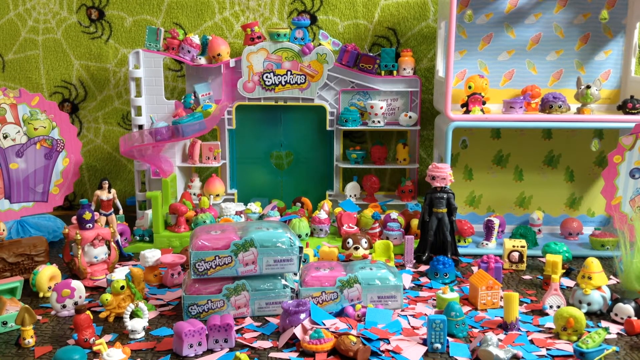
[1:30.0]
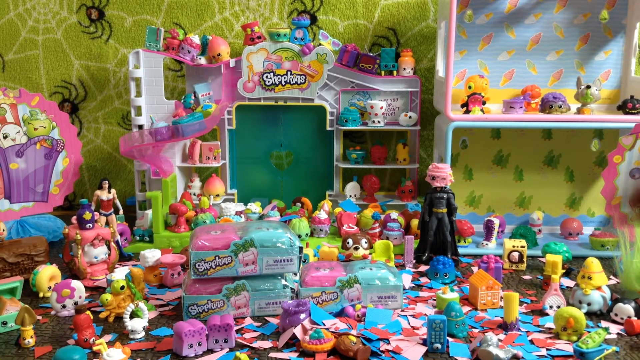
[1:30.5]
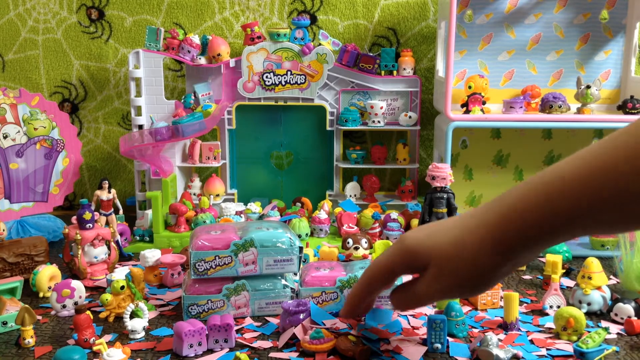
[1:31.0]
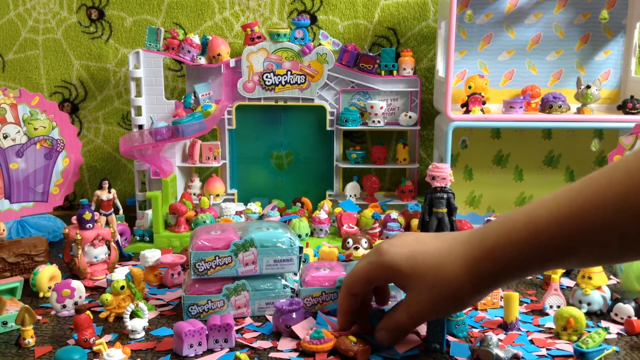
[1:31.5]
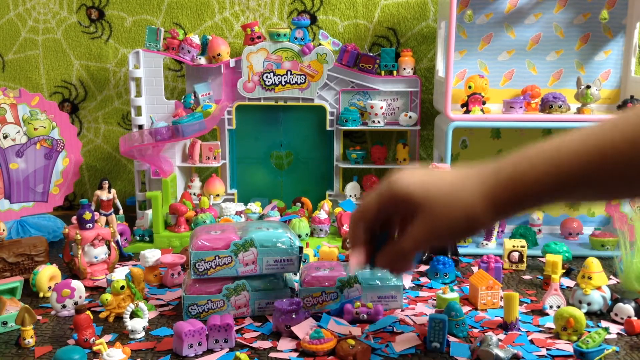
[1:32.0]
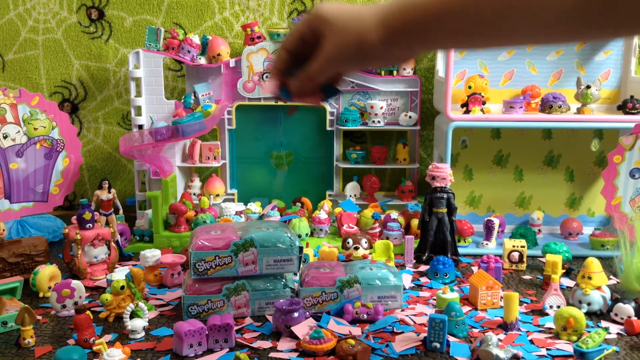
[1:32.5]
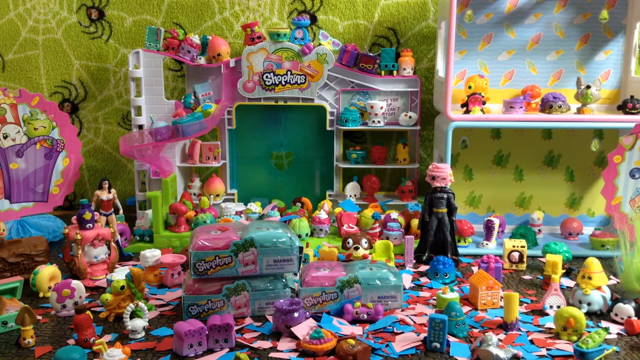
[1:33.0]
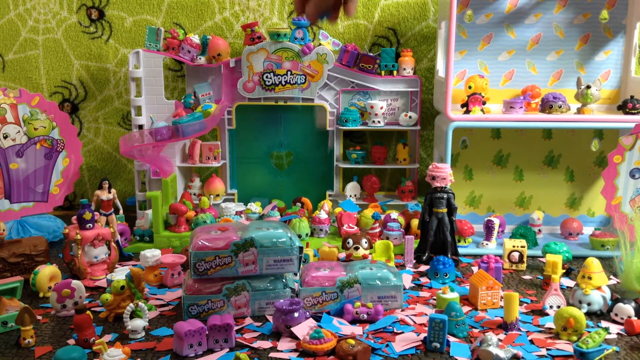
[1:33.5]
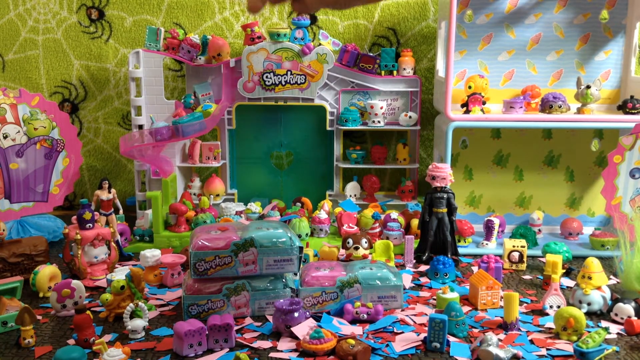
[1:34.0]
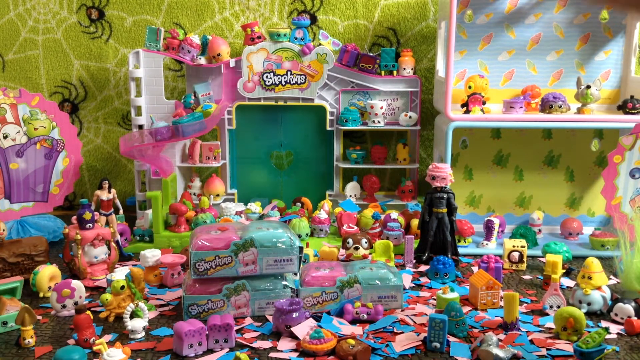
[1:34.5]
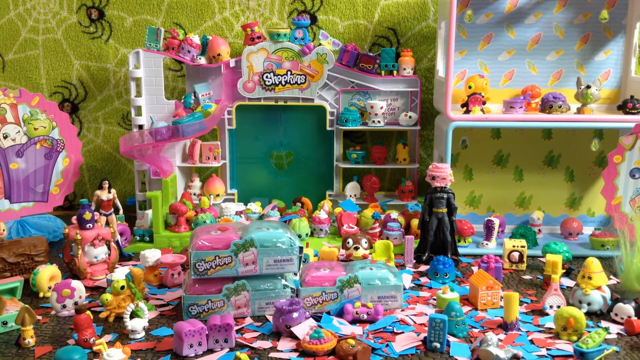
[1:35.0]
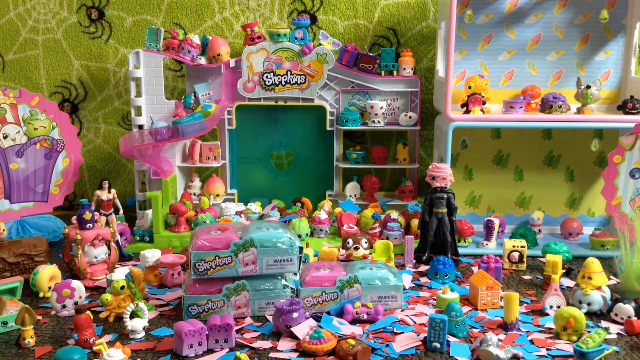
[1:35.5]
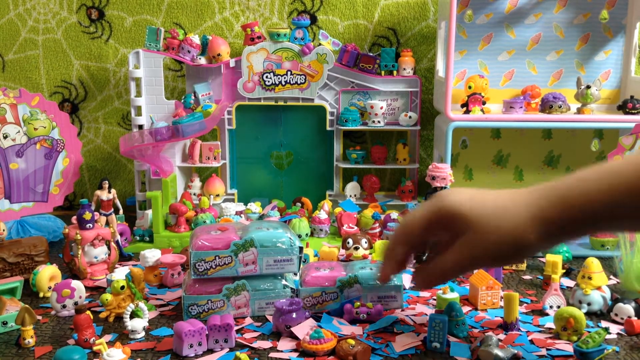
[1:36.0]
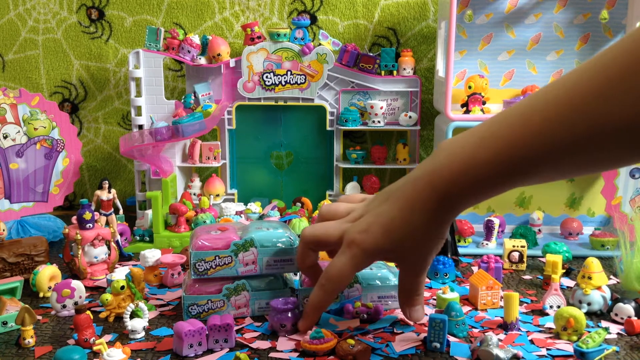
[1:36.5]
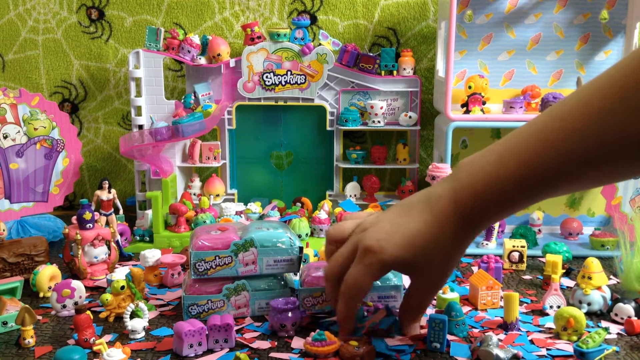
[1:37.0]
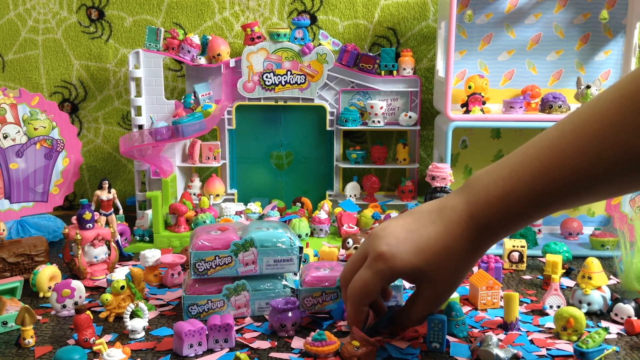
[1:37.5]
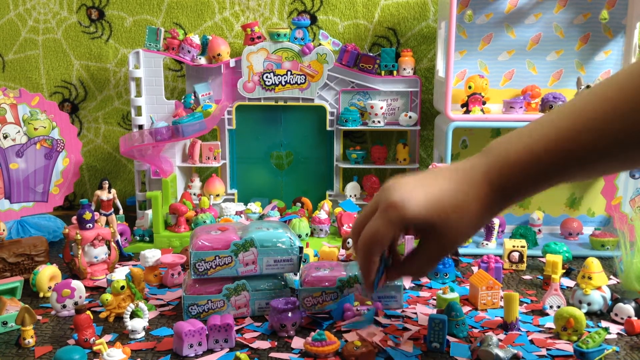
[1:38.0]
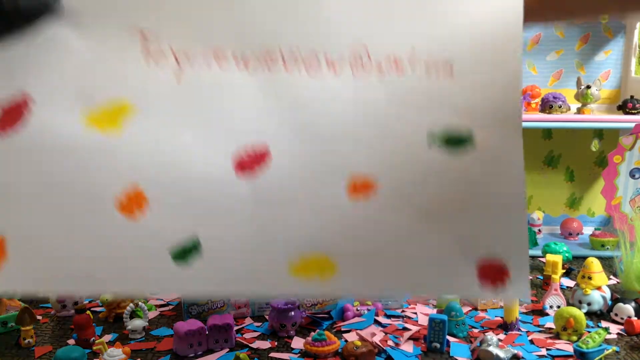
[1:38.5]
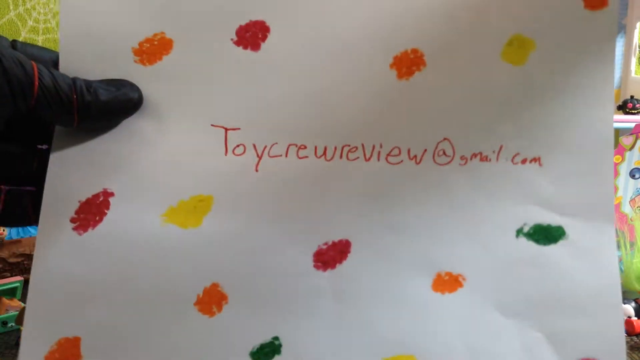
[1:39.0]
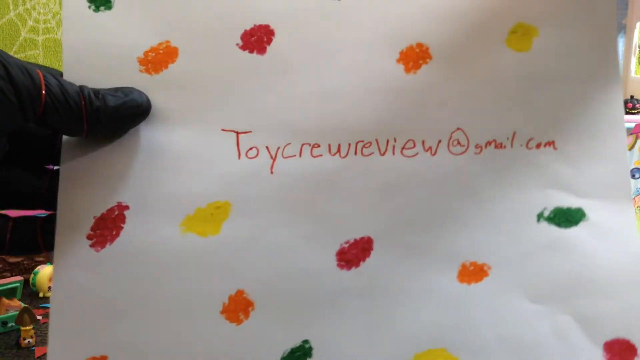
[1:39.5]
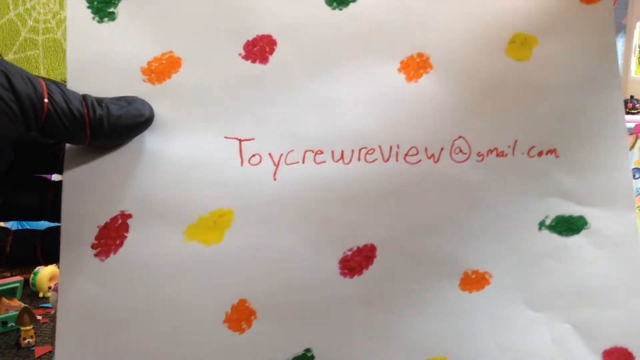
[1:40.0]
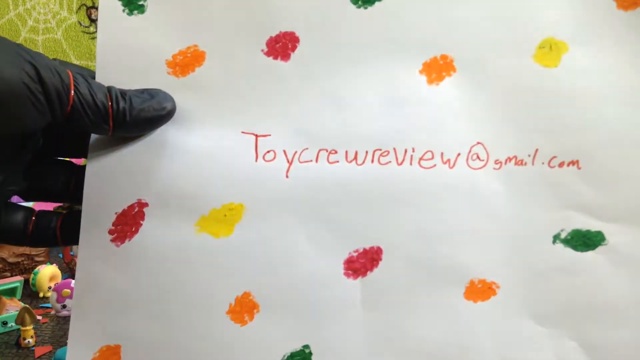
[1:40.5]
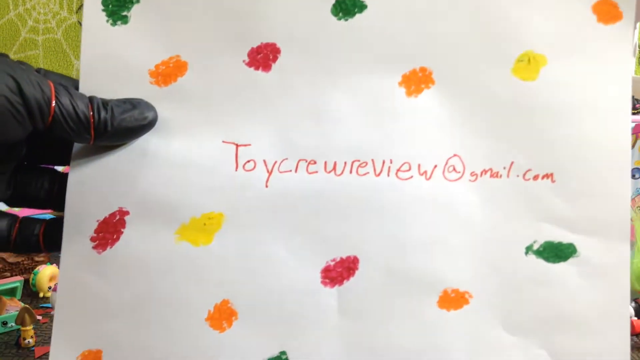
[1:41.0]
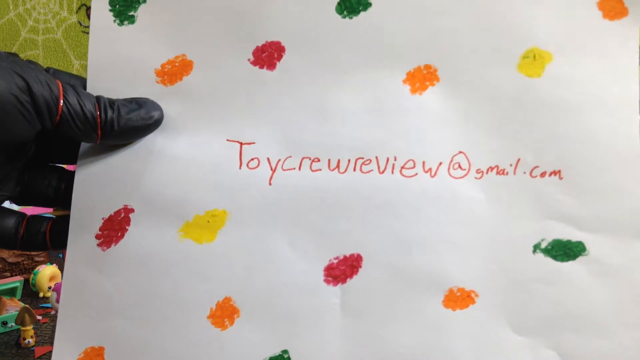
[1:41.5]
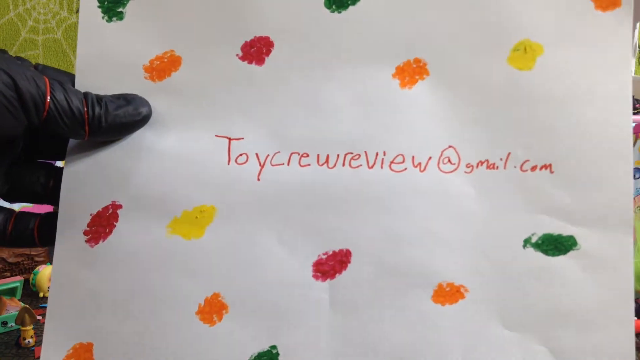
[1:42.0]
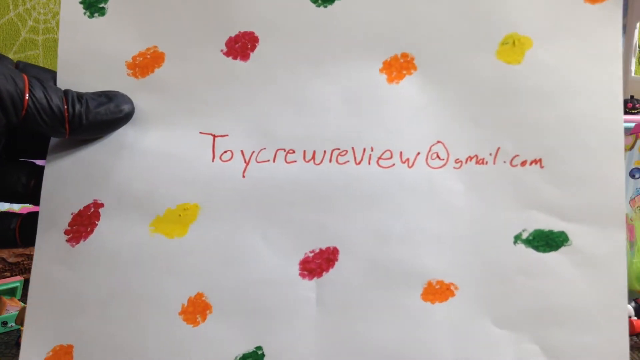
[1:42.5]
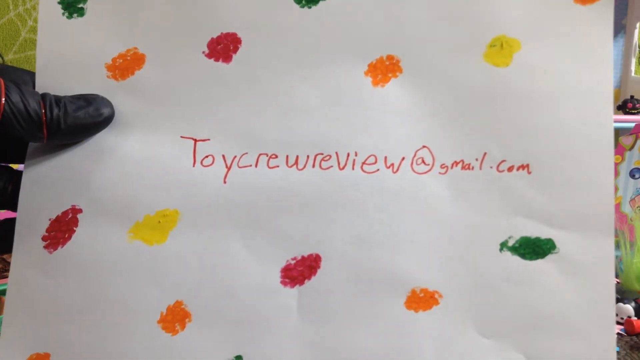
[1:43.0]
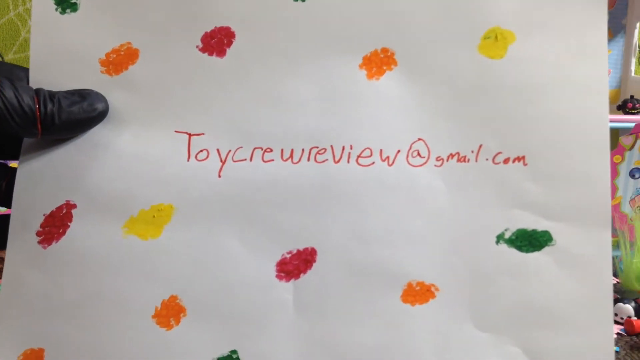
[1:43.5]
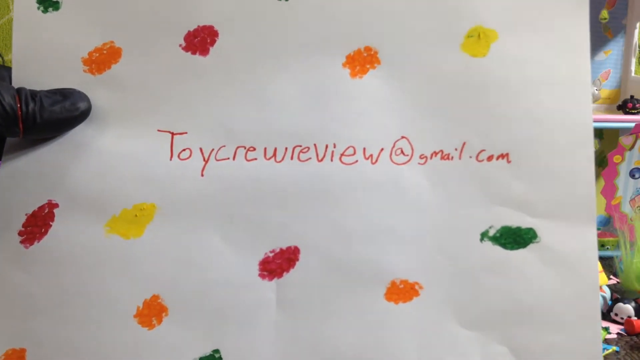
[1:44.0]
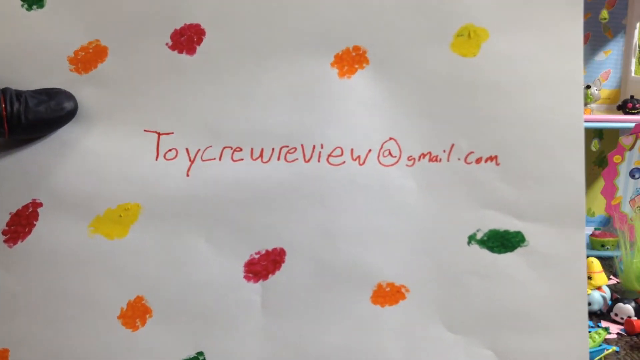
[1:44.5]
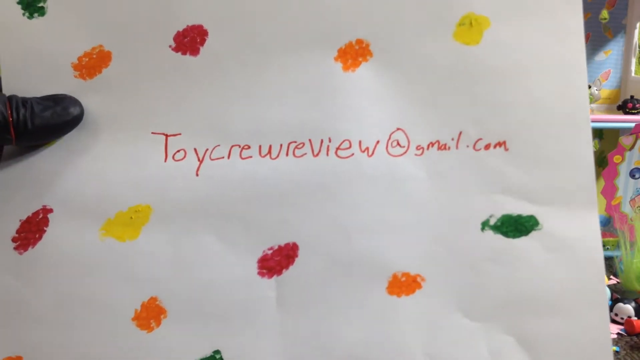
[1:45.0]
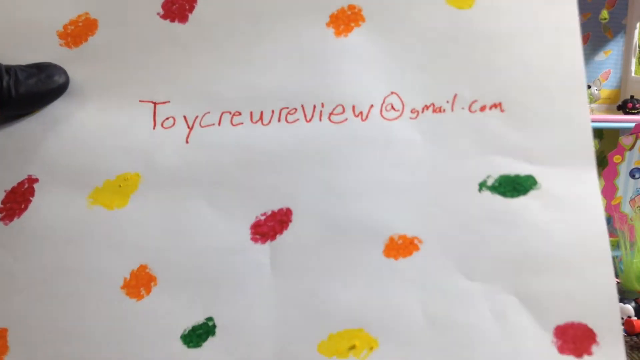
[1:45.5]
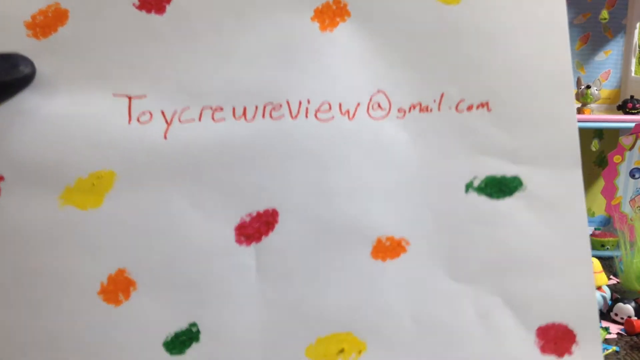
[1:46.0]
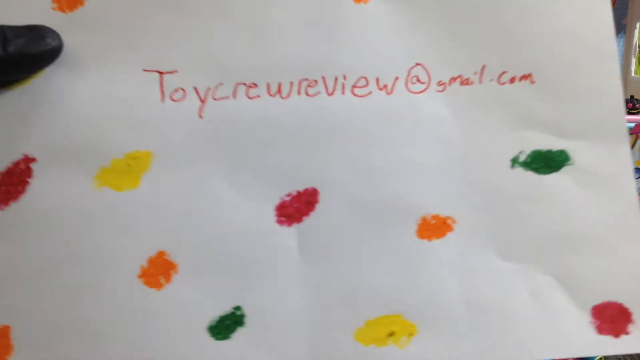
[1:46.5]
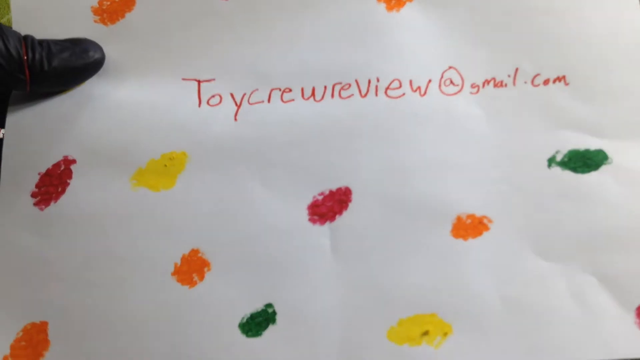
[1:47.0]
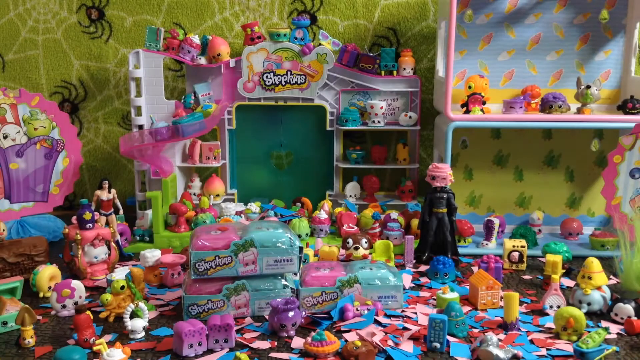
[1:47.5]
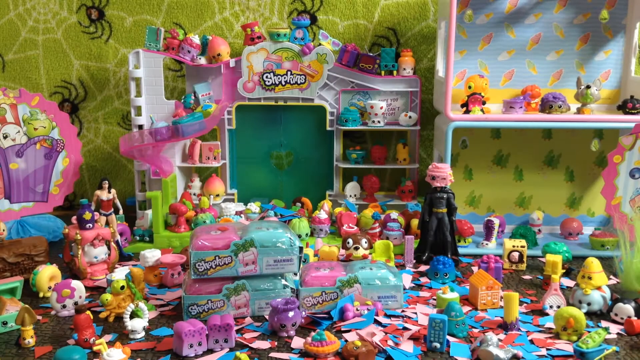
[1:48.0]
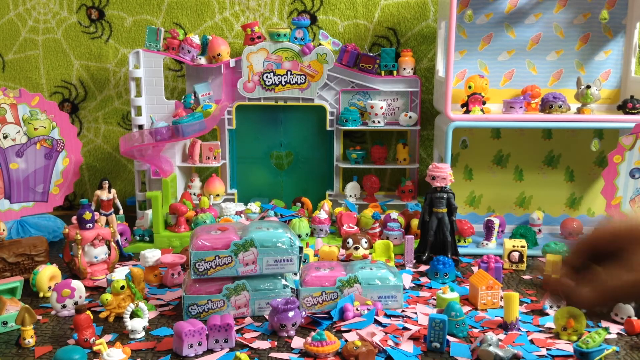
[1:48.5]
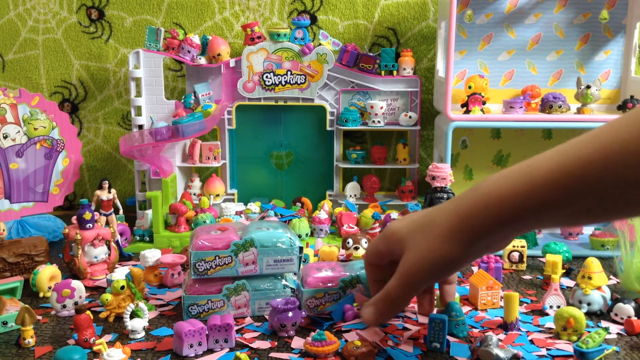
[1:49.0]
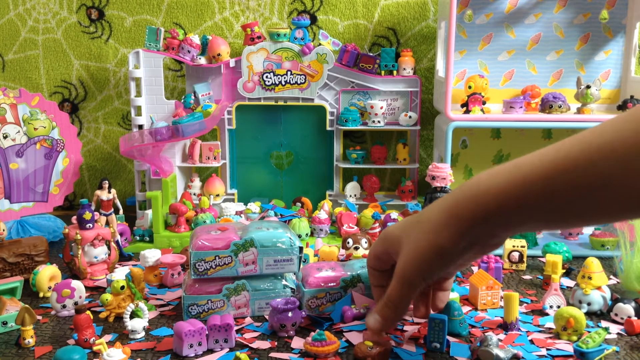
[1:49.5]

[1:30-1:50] The room is full of very colorful toys, some blue, others pink or purple. The wall is mostly green, with cobwebs drawn on it, spiders drawn in black, and some green patches. The hand of a person pops up, picks up some blue papers, and drops them through the air. Another hand, wearing black gloves, comes up holding a paper sheet with "toycrewreview@gmail.com" written on it. There is a toy that looks like Batman wearing a black suit and another wearing a red blouse and blue pants; below them are some yellow toys, a toy that looks like a duck, and another that looks like an orange house.